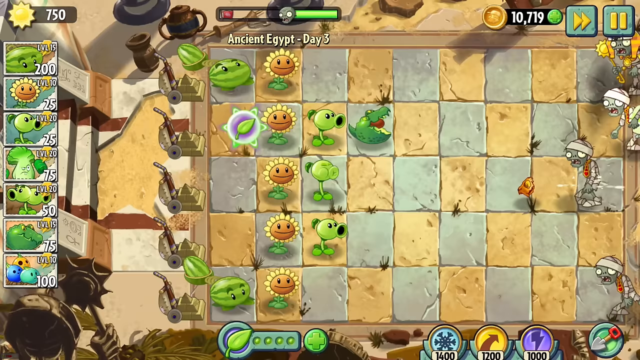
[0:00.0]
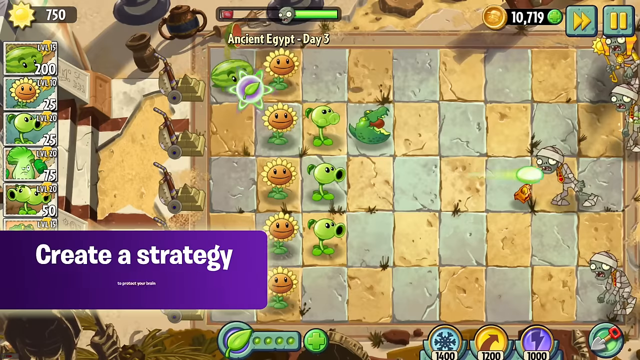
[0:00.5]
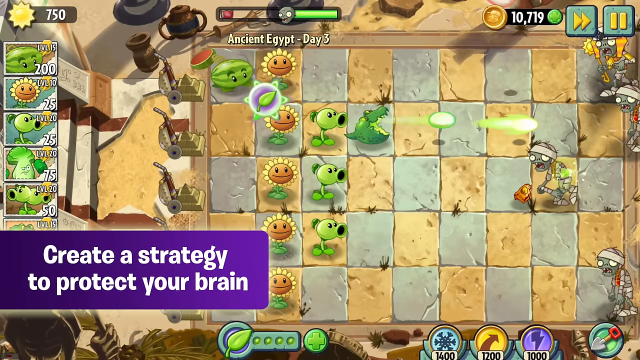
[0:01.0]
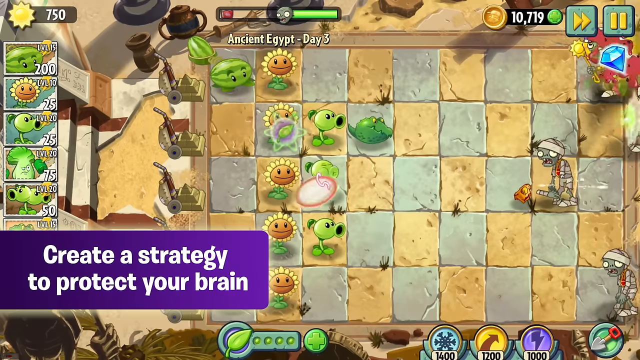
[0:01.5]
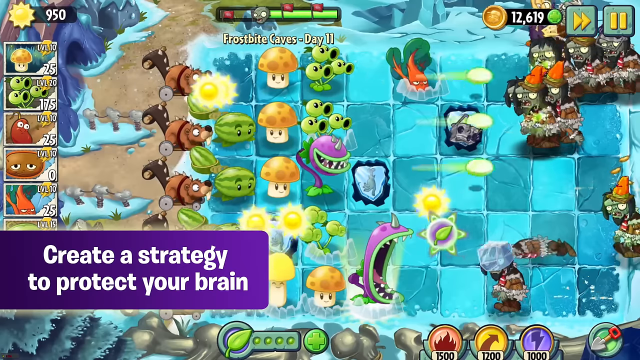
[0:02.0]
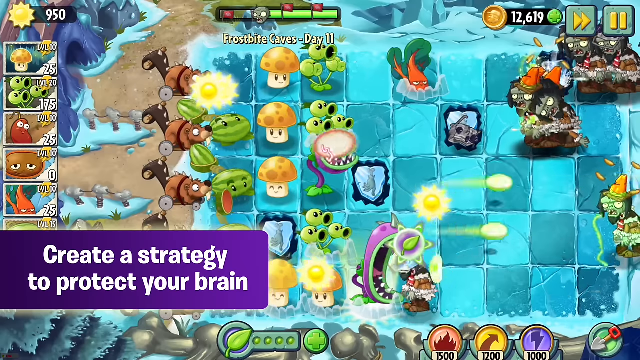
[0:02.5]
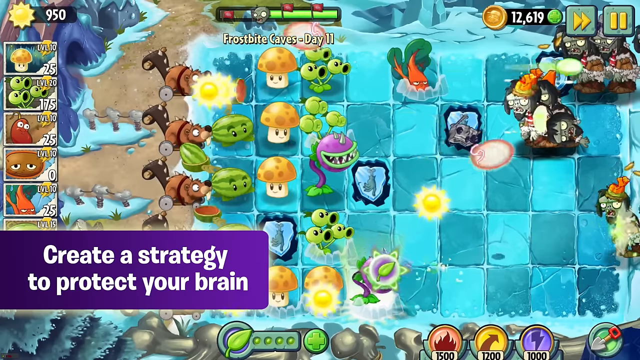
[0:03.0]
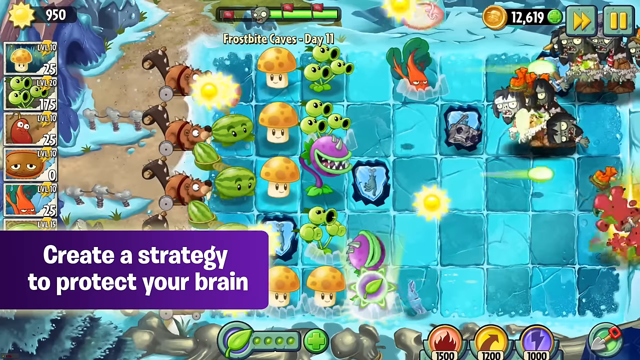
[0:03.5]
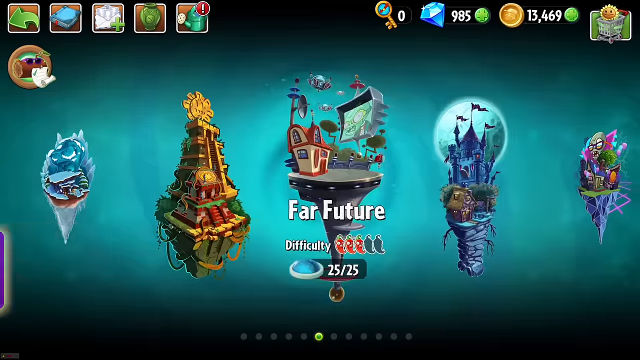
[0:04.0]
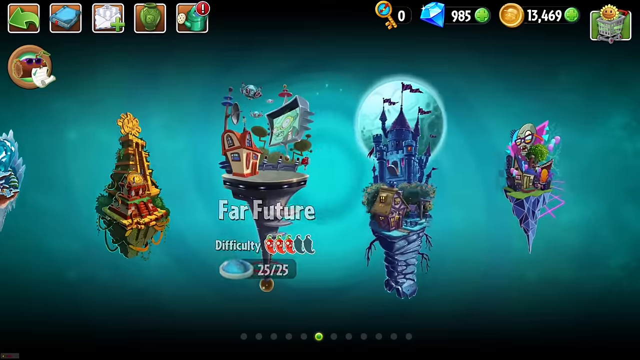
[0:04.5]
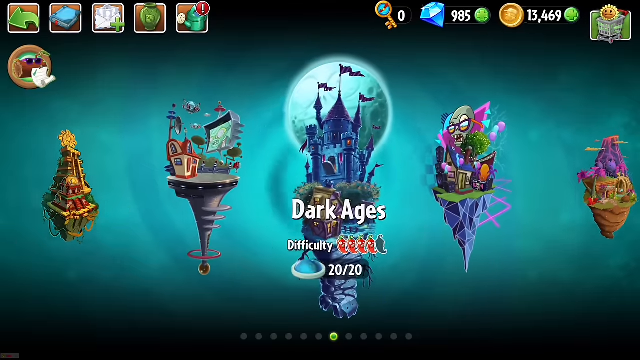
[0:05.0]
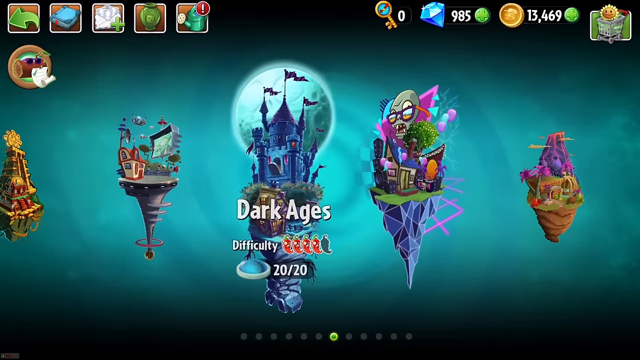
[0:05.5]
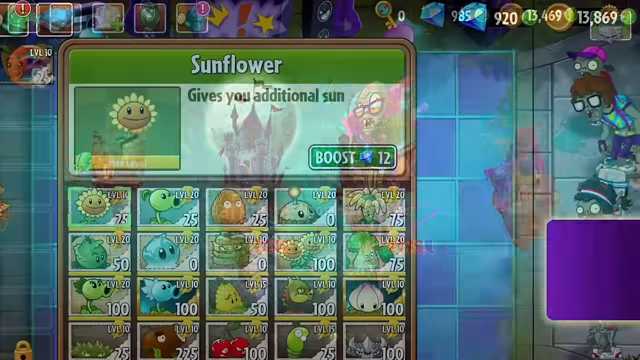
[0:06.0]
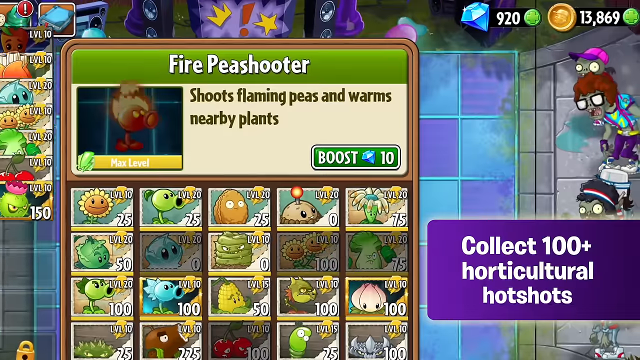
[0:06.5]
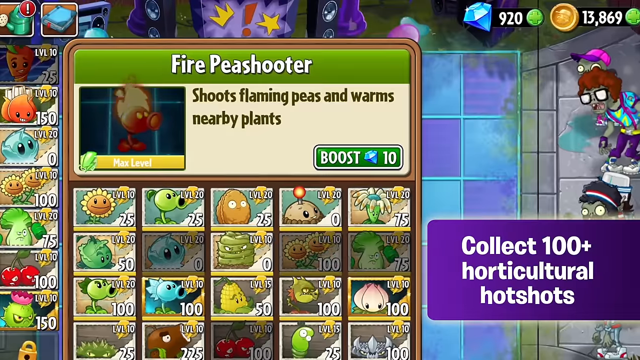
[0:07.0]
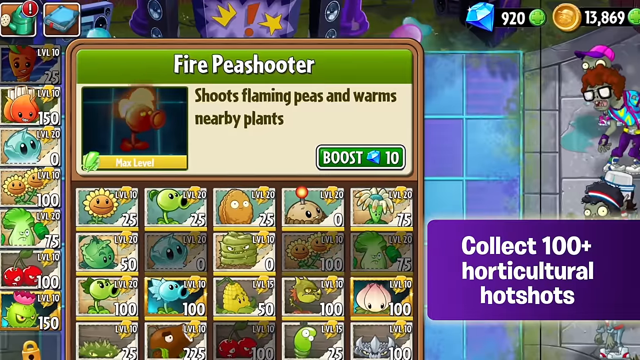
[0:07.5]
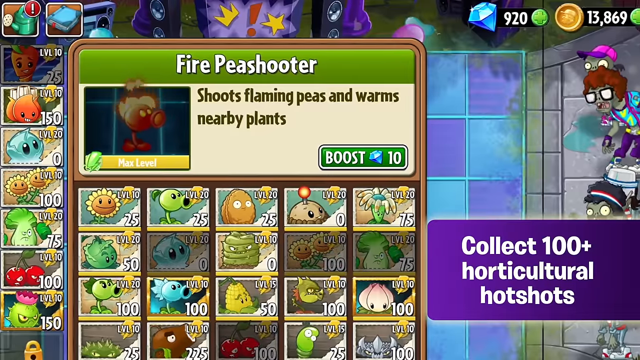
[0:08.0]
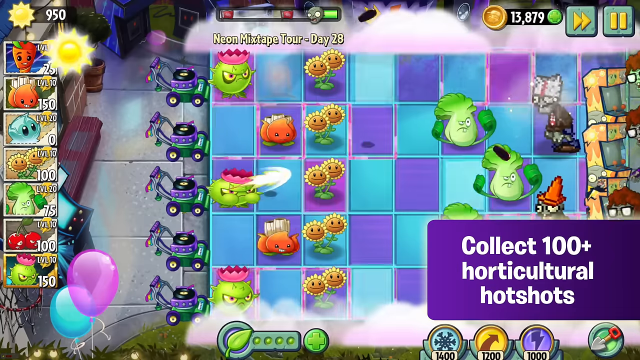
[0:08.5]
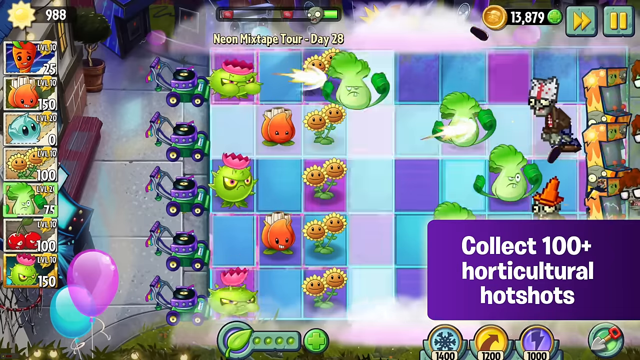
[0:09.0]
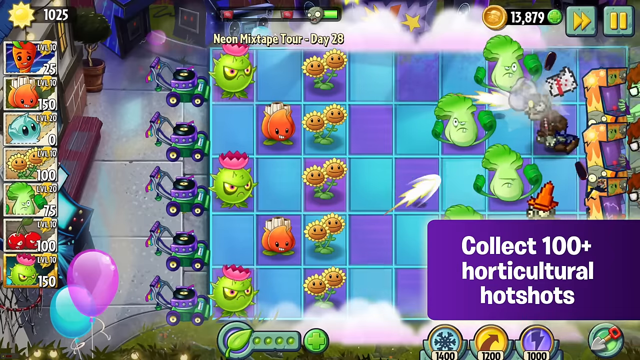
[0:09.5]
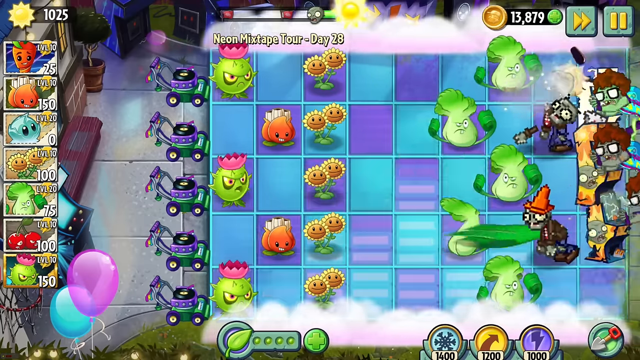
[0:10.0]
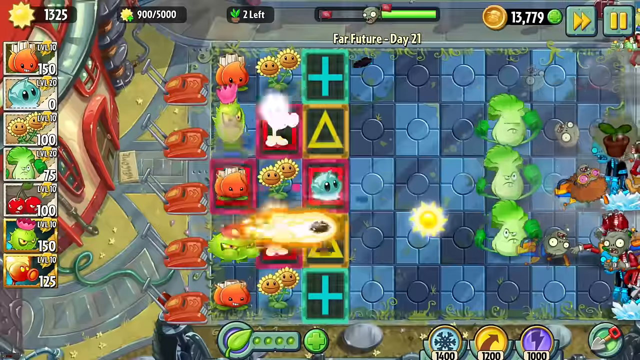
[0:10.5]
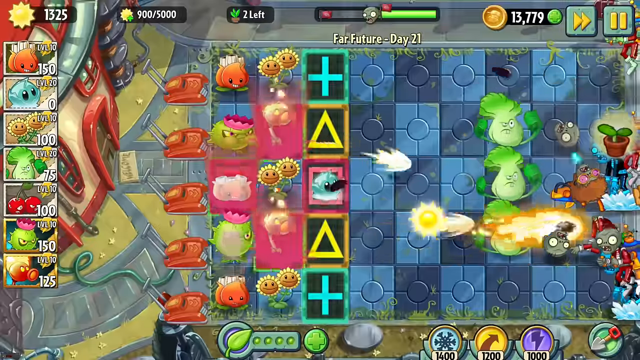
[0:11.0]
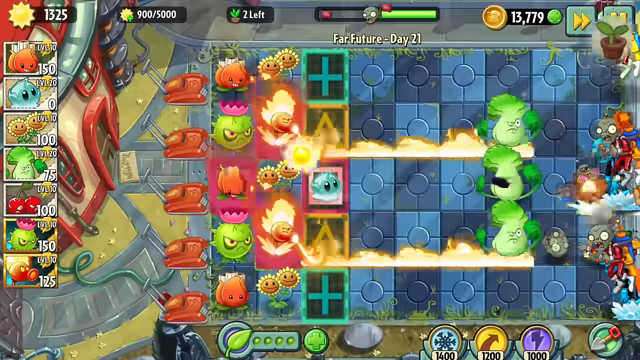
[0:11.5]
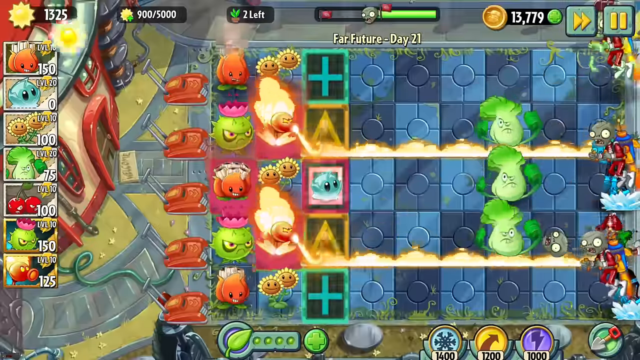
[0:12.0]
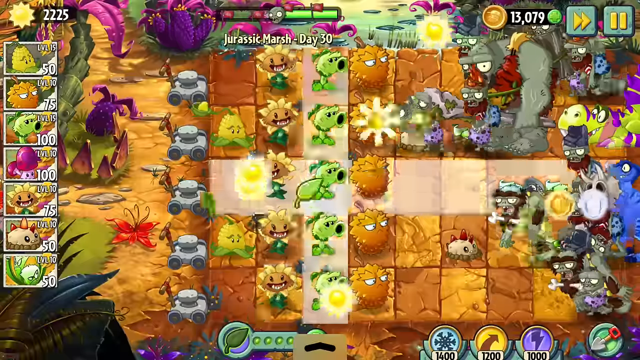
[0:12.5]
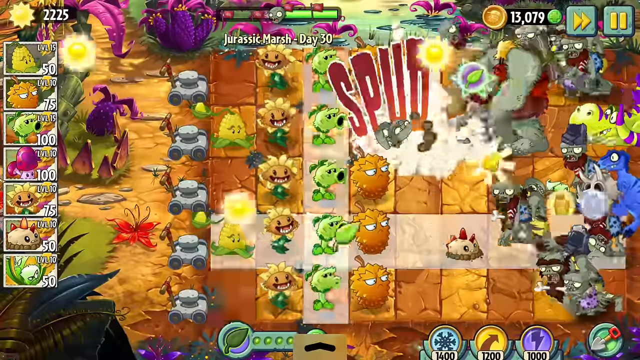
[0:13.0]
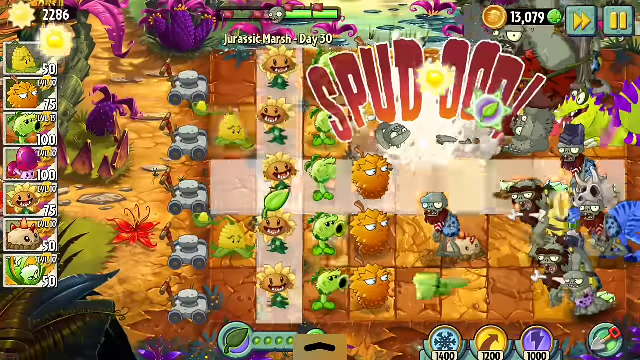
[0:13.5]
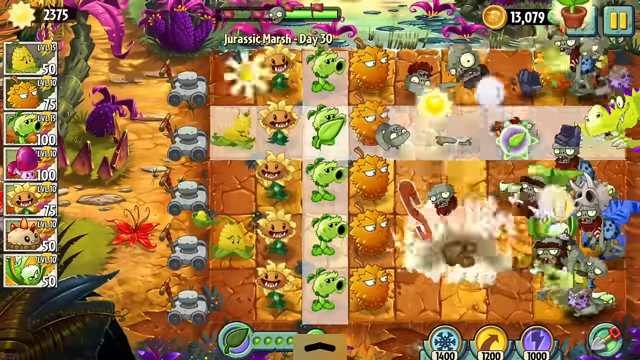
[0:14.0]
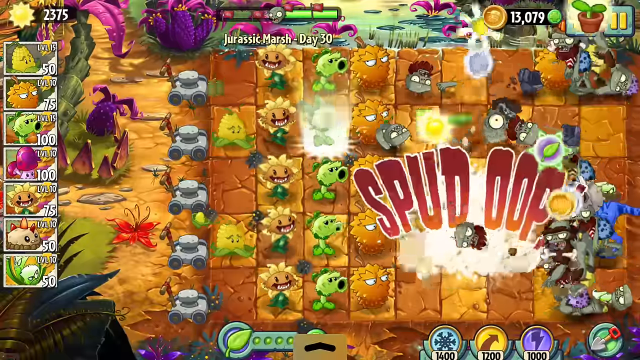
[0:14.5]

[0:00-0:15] The video appears to show Plants vs. Zombies, seemingly a mobile app, apparently the second version. A strategy is underway: plants on the left-hand side fire basic projectiles at zombies coming in from the right-hand side of the screen. The plants are arranged on a very light blue and yellow game board that looks very beat up. In the lower left-hand corner, a purple rectangle holds white text reading "Create a strategy to protect your brain." Another game board follows, with kind of diagonal alternating colors like a chess board, in dark blue and aqua blue. Many plants on the left-hand side fire projectiles at zombies coming in from the right. Among them are watermelons with eyes, mushrooms, the classic green plants that fire projectiles, and something like a piranha plant in purple, all lined up on the left-hand side of the board, defending their zone. On the right-hand side are some gray zombies and some green zombies, and the projectiles are fired at them. Various levels are shown, each with different drawings and colors. The video then cuts to another screen with a purple rectangle on the right-hand side reading "Collect 100 plus horticultural hot shots," along with what look like boxes displaying the various plants that can be unlocked and bought to defeat the zombies. Another flashing game board follows, with a bunch of plants that look like a cranky cactus, an orange flower, and sunflowers with eyes firing projectiles at gray zombies. The video then cuts through various gameplay scenarios, such as an orange board and a blue and purple board, with different combinations of plants and zombies.